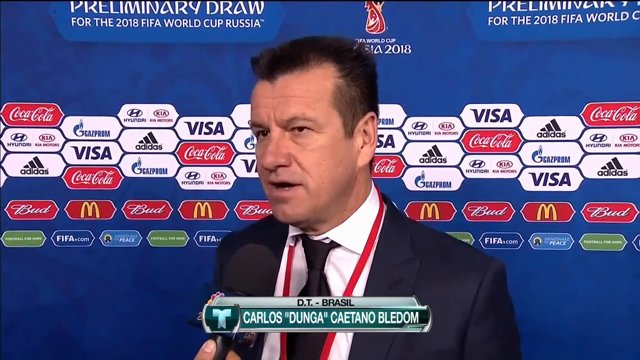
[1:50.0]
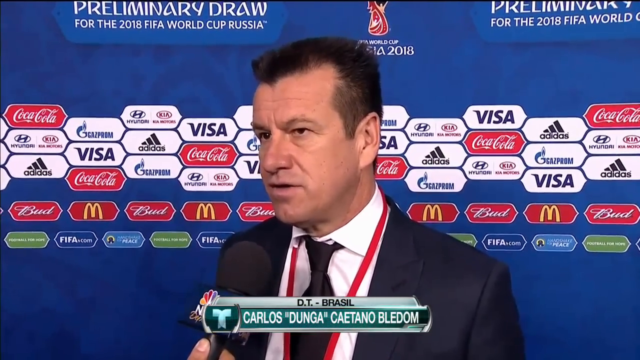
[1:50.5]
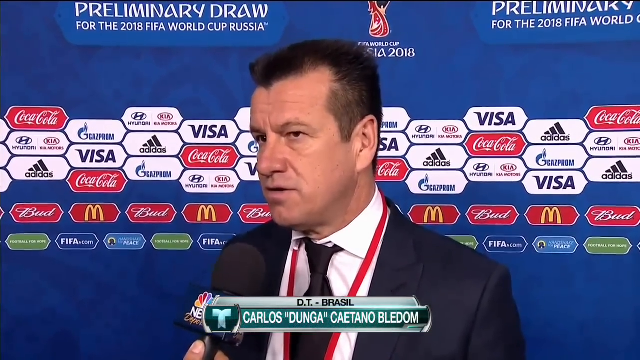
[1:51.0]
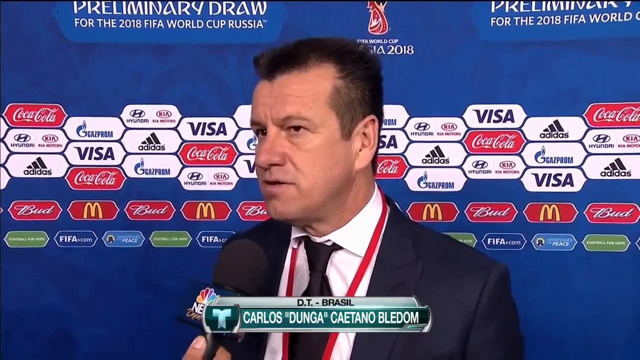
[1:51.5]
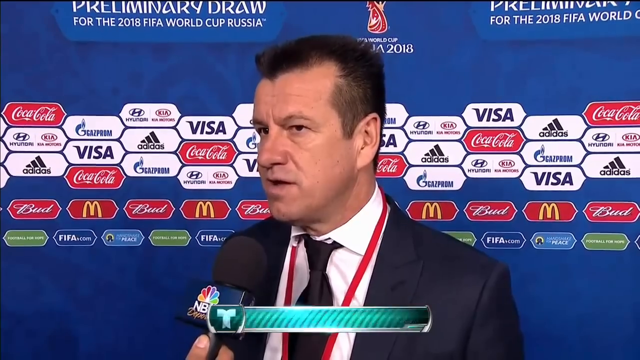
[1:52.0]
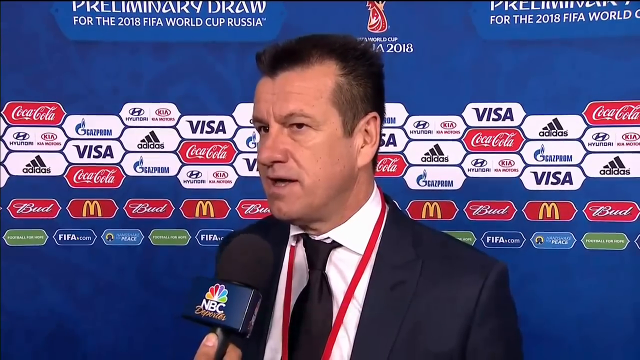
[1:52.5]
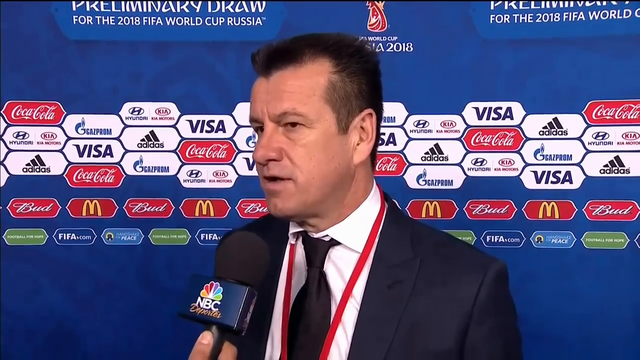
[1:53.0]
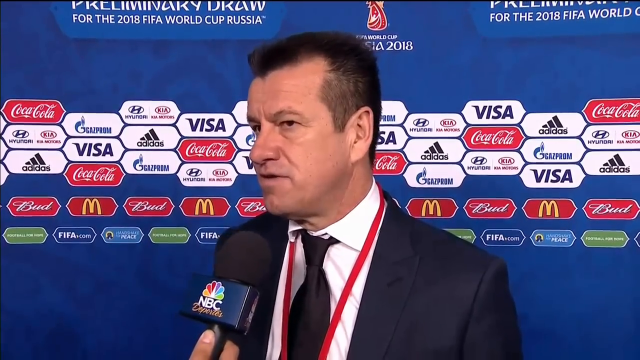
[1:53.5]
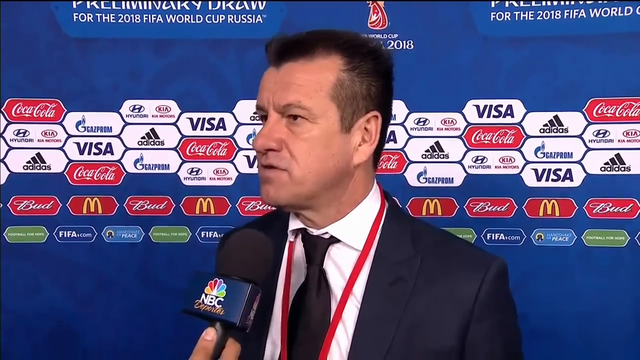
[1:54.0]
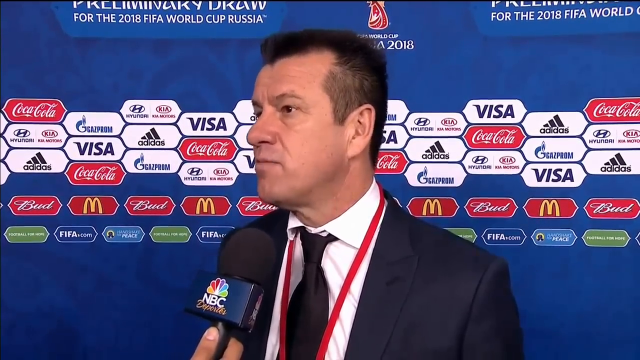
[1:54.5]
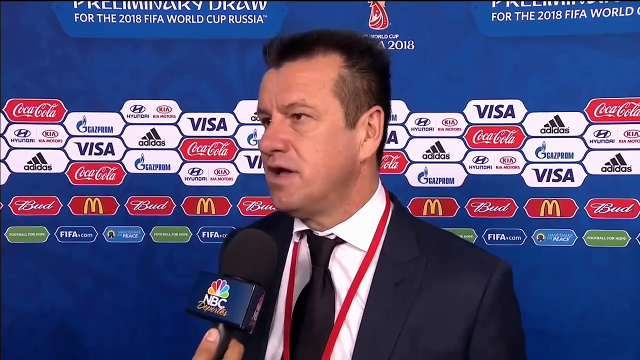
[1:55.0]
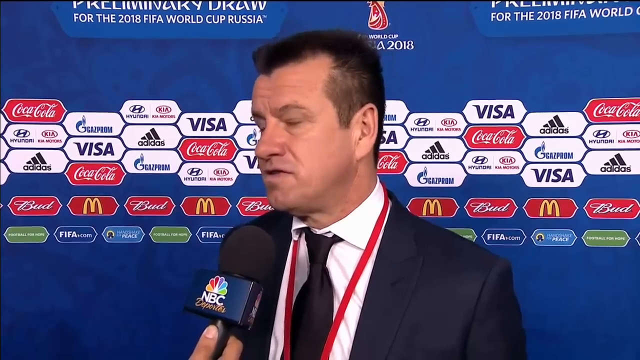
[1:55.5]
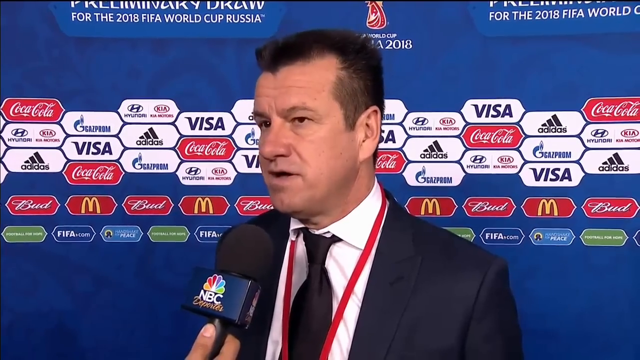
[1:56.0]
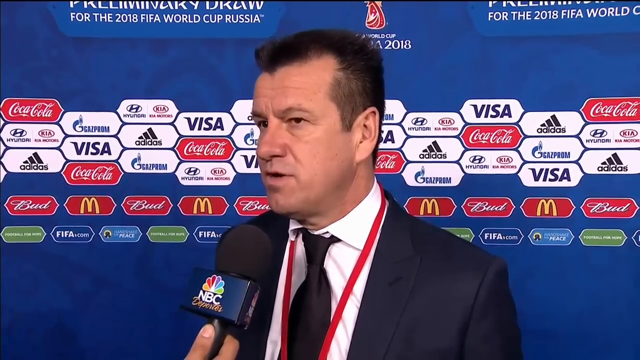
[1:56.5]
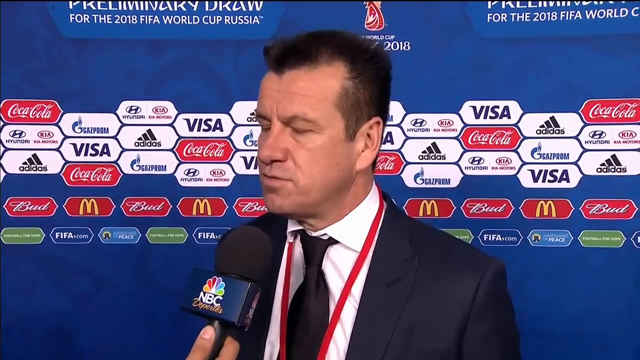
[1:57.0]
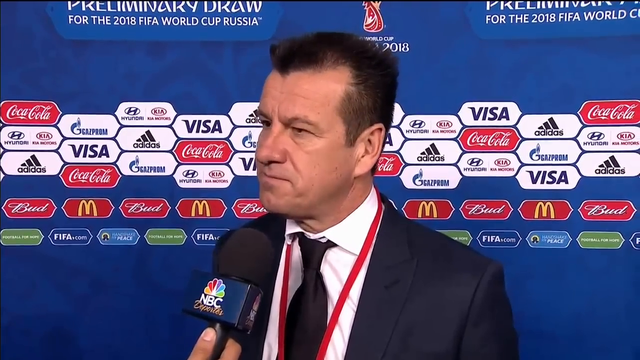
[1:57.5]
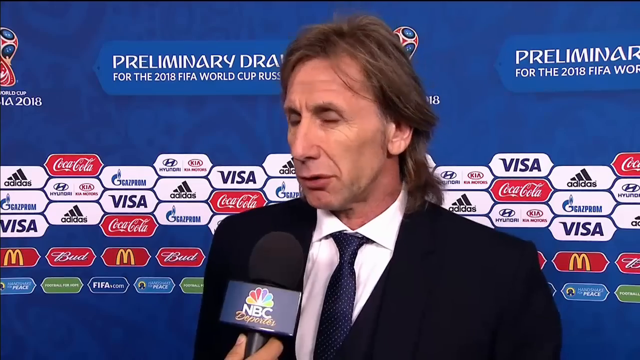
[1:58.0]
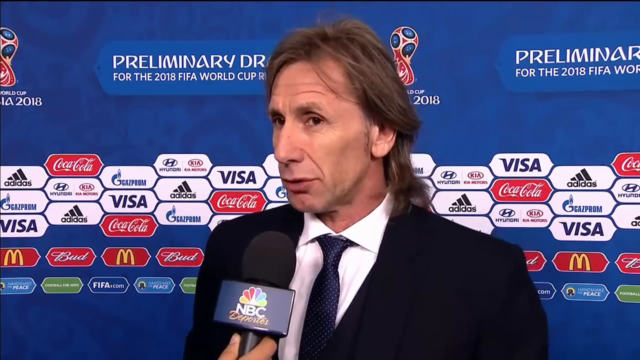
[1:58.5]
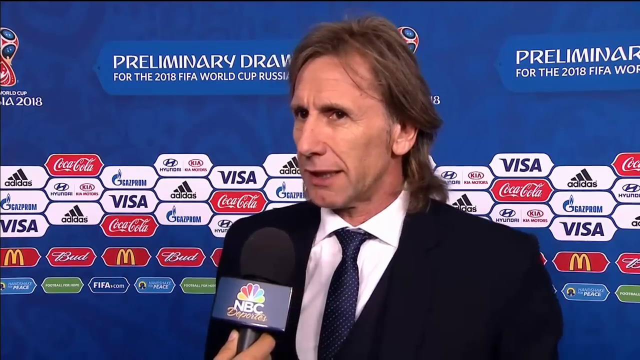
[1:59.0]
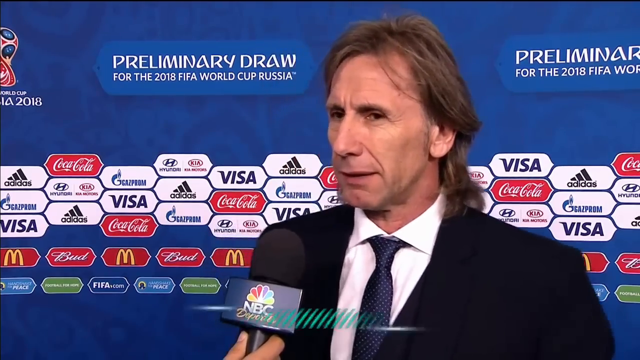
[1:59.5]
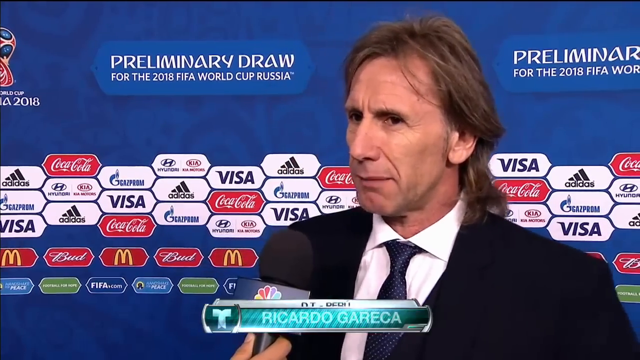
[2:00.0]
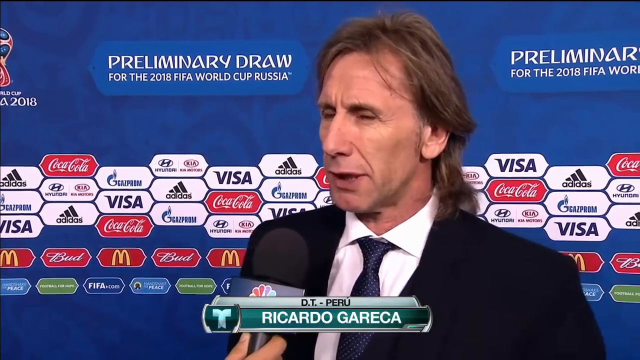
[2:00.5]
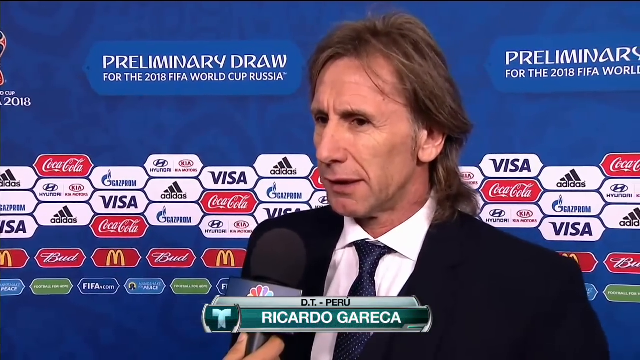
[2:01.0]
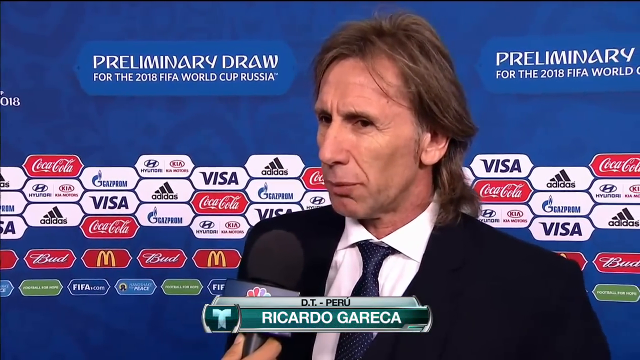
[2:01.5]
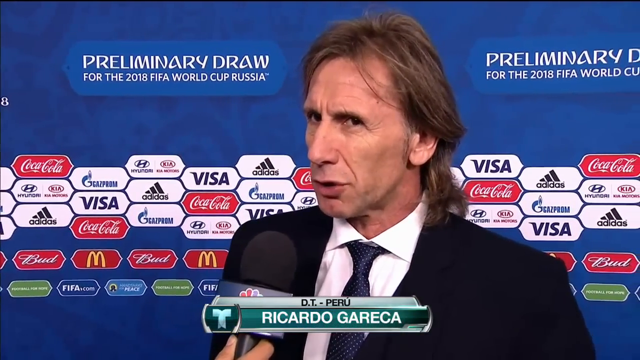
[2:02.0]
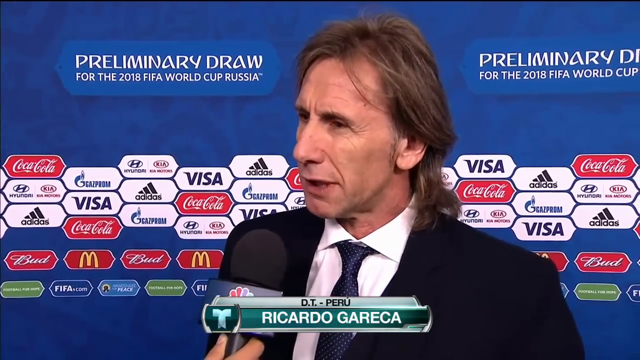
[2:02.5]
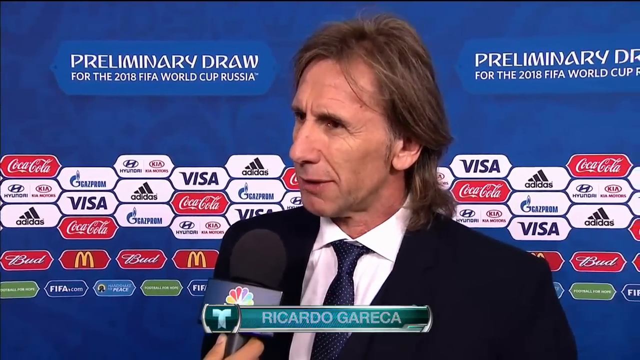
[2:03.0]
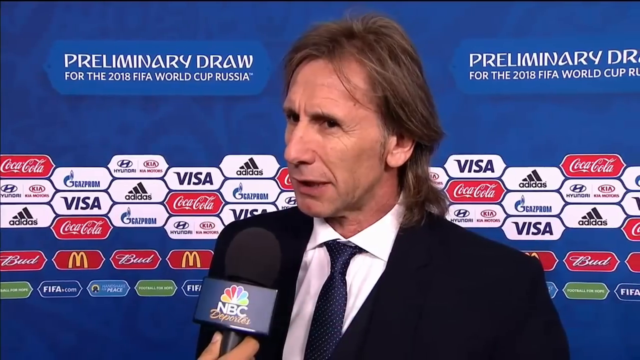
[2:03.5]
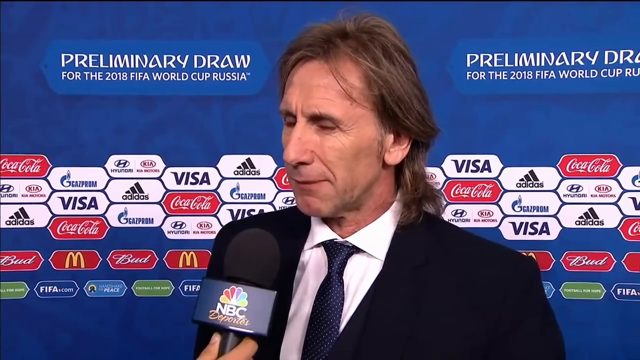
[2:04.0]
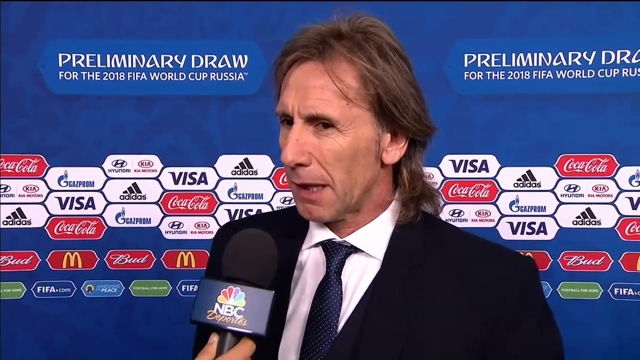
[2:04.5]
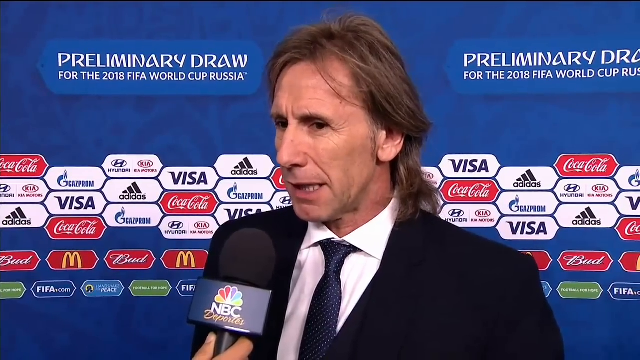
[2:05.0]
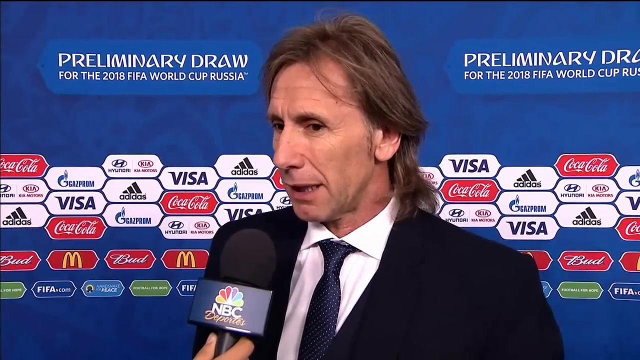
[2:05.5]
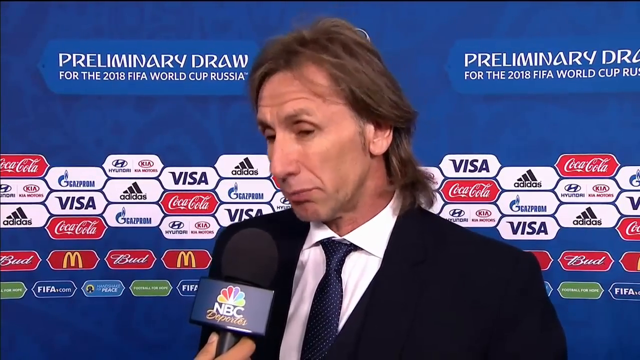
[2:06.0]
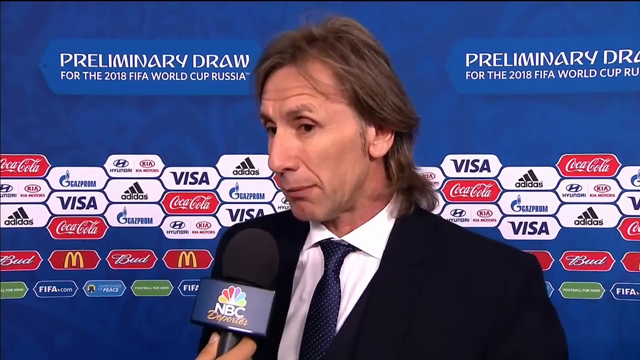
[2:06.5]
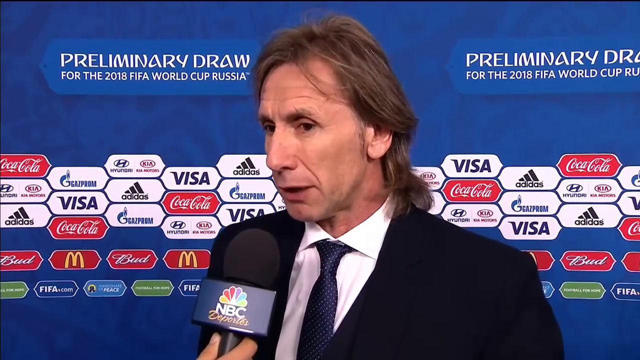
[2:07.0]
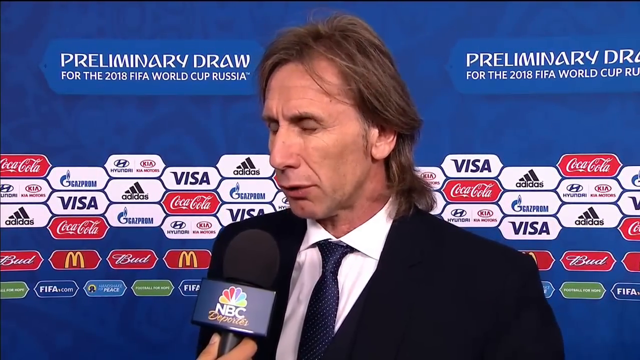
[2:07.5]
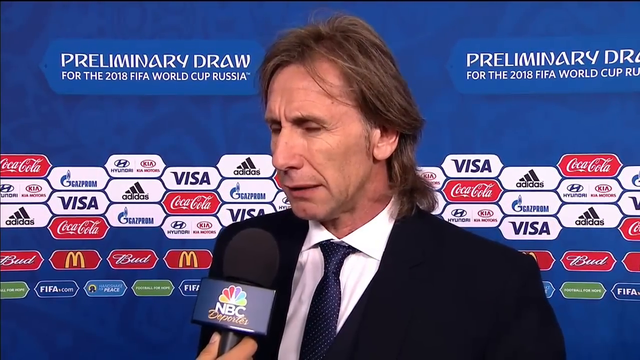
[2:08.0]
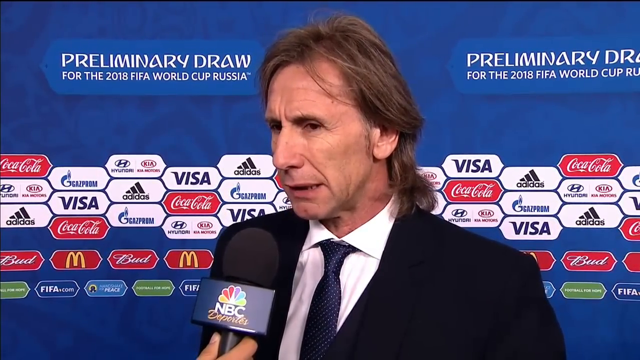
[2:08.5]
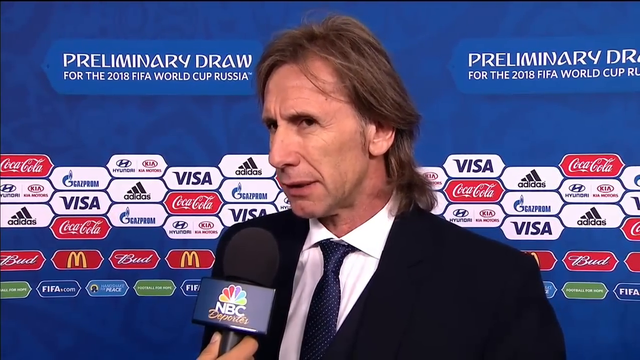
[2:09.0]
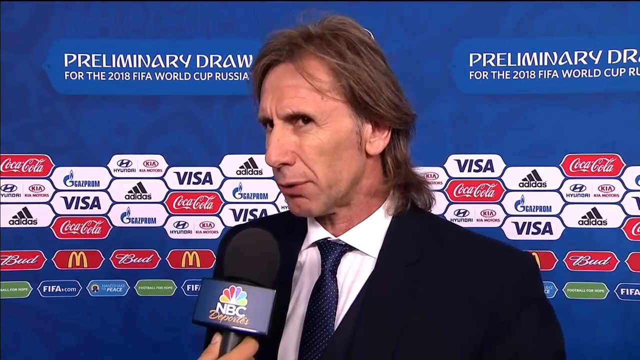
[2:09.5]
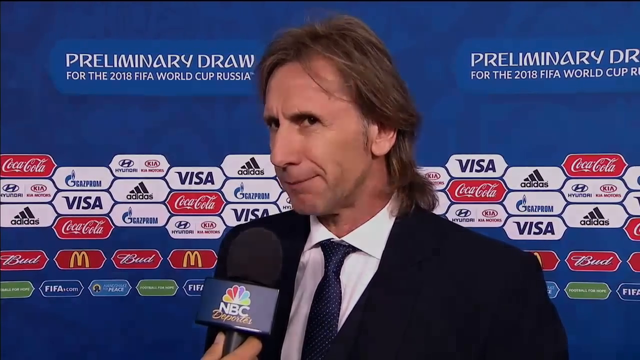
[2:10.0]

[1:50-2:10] The man in a suit and tie continues to be interviewed, with "DT Brazil Carlos Dunga Caetano Bledum" shown at the bottom. Someone holds a microphone with the logo "MBC Deportes" in front of him. Behind him is a blue background with sponsor companies including Visa, Hyundai, Kia, Adidas, Coca-Cola, McDonald's, Budweiser, Fifa.com and Gazprom. Another man, also wearing a suit and tie, then appears, with his title and name in the bottom center of the screen reading "DT Peru Ricardo Gareca". The video is in a rectangular shape, of good quality, with smooth transitions.